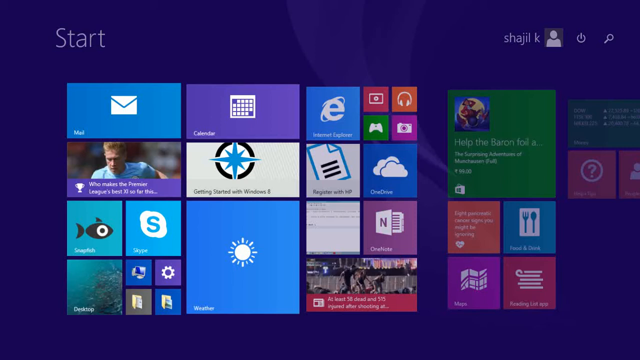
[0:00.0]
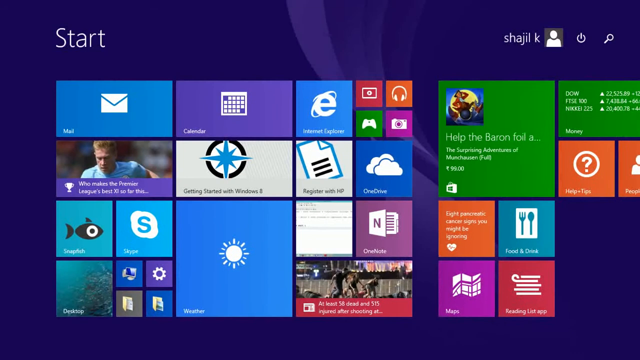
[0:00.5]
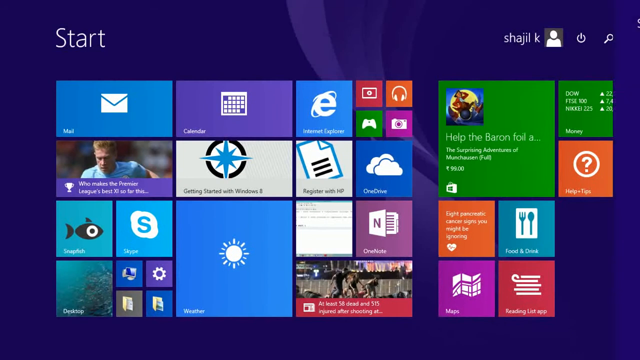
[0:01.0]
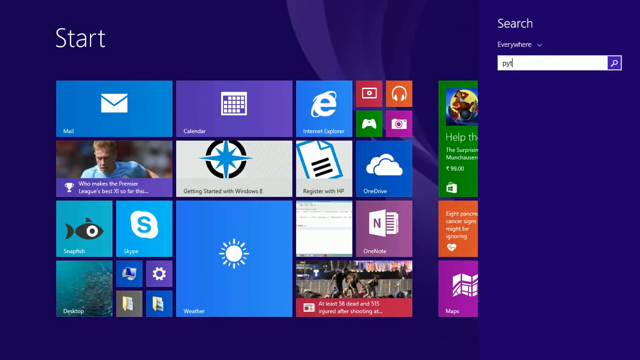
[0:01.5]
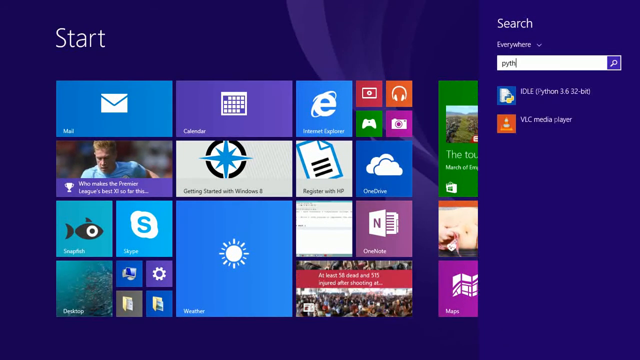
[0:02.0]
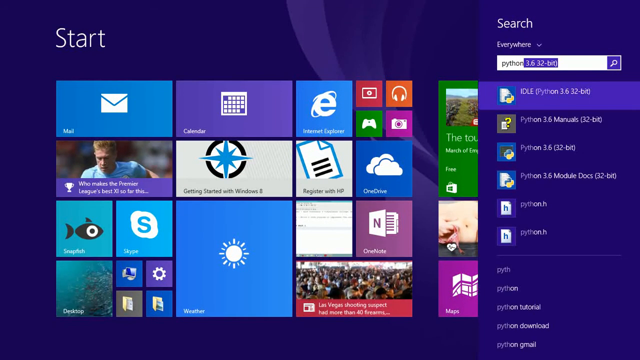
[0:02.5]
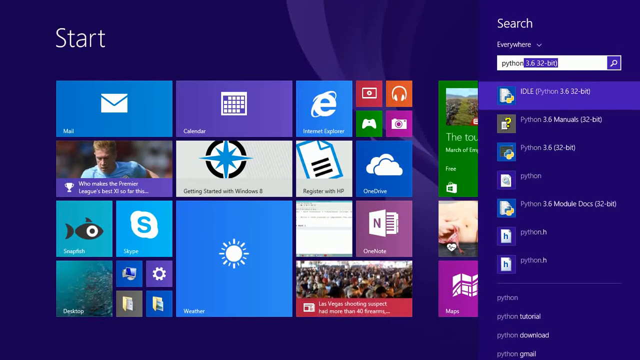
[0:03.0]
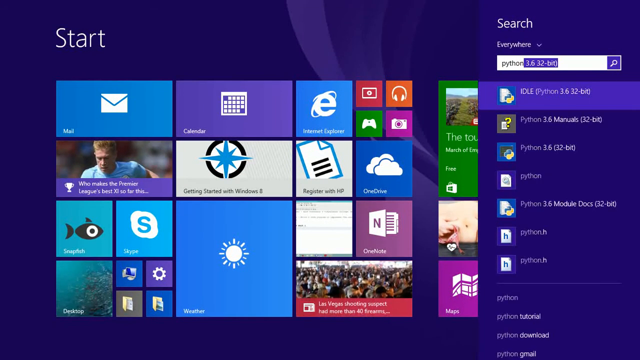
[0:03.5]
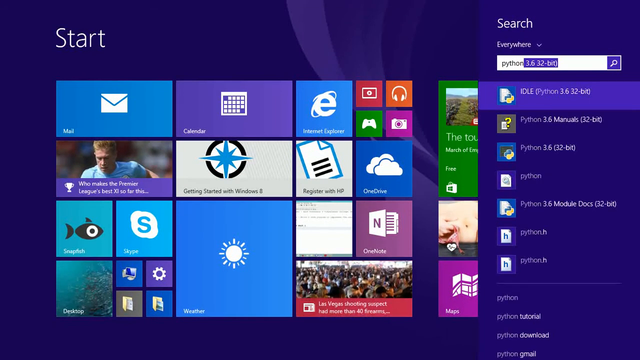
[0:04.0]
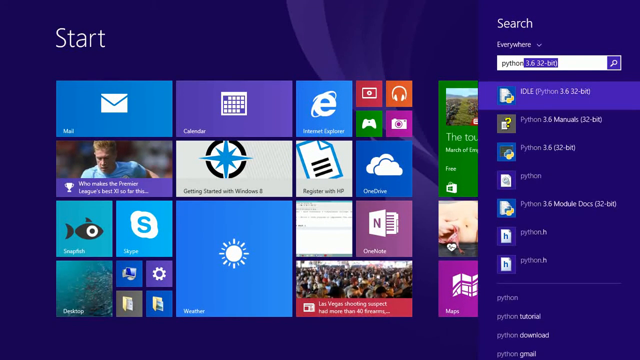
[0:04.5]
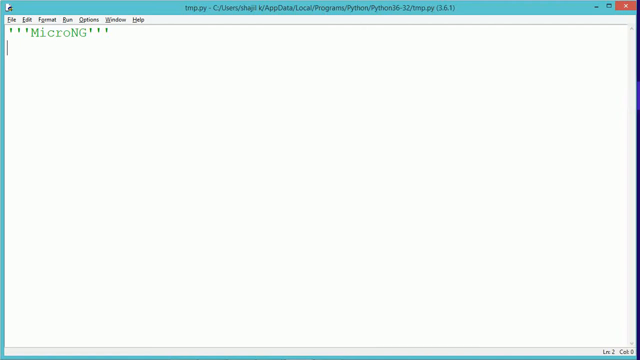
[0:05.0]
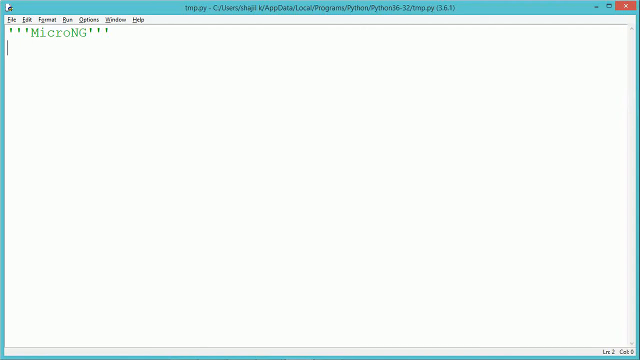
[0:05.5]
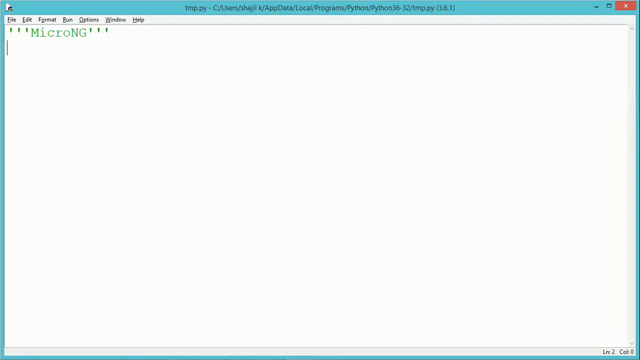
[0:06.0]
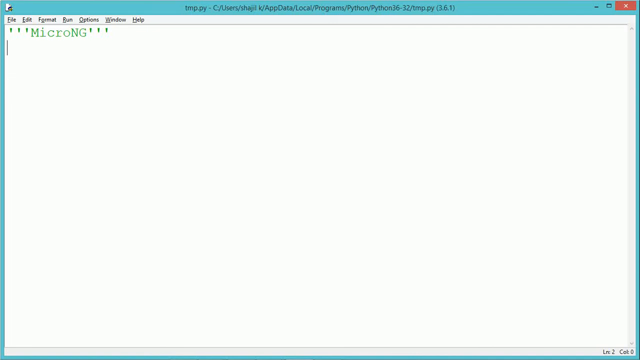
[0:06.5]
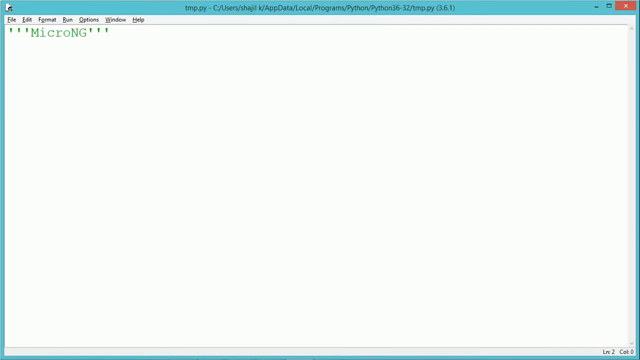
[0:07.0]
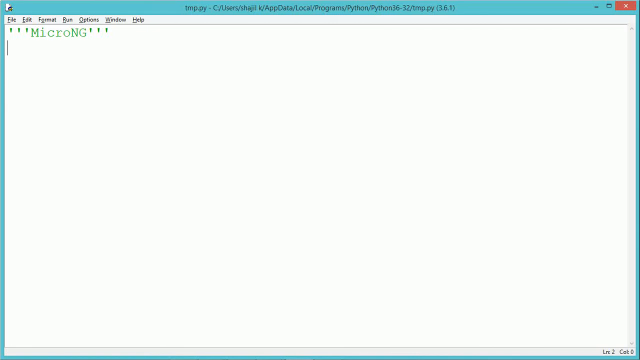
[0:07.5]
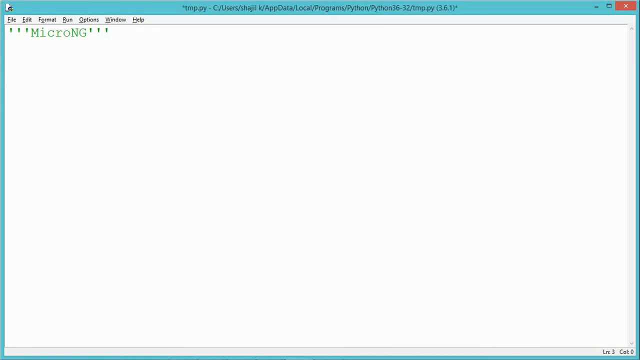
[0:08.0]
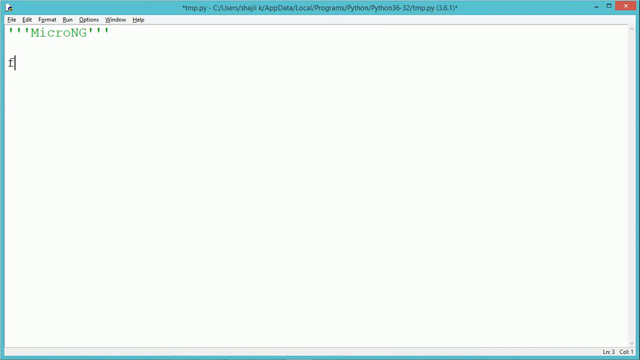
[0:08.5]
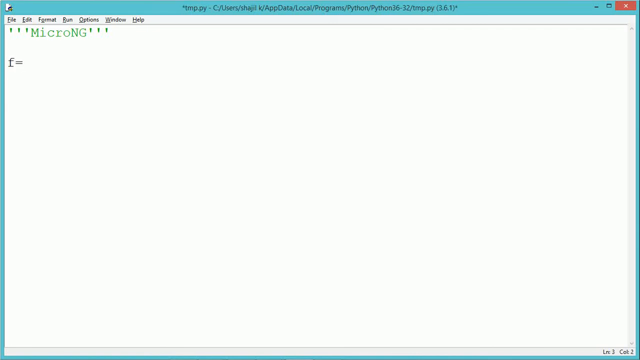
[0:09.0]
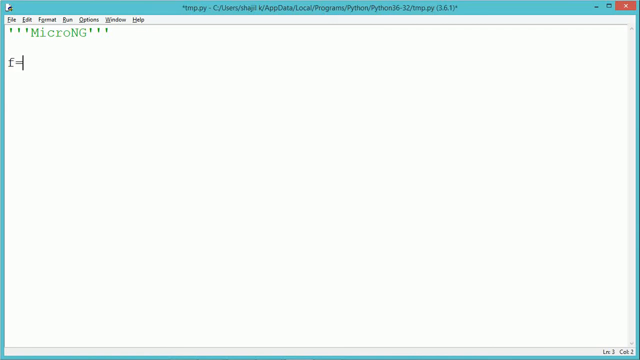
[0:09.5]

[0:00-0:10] The Microsoft Start menu is shown, with a blue background. It includes email, news, calendar, Internet Explorer, a video player, a music player, an Xbox player, all games, OneDrive, OneNote, My Computer and some files, as well as Skype and weather; on the right side there are Maps, Food and Drinks, and a live feed. The user clicks the search icon at the top right, searches "Python" and presses Enter. The Python application opens, showing the compiler.